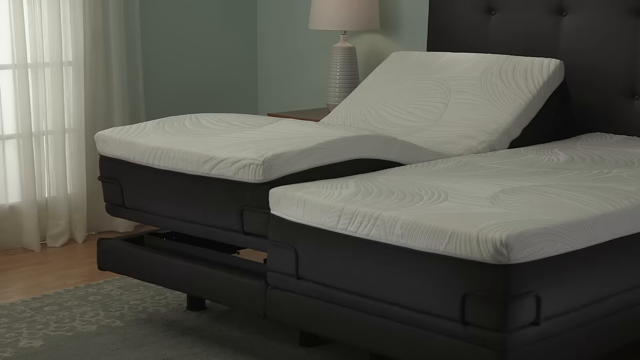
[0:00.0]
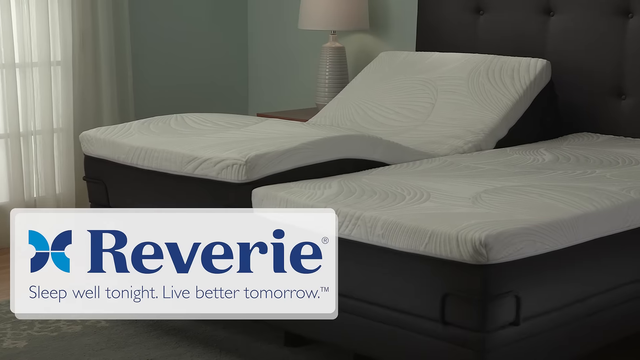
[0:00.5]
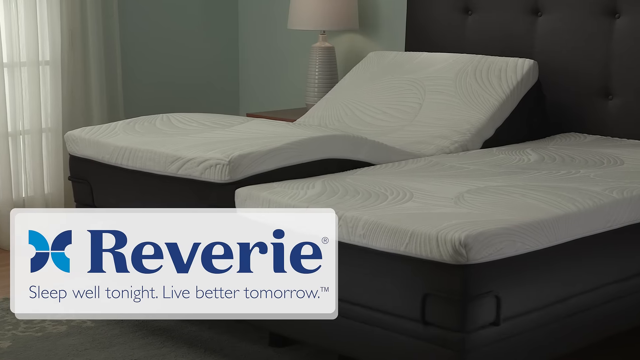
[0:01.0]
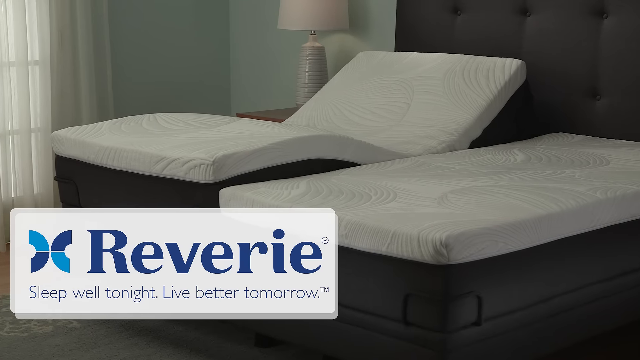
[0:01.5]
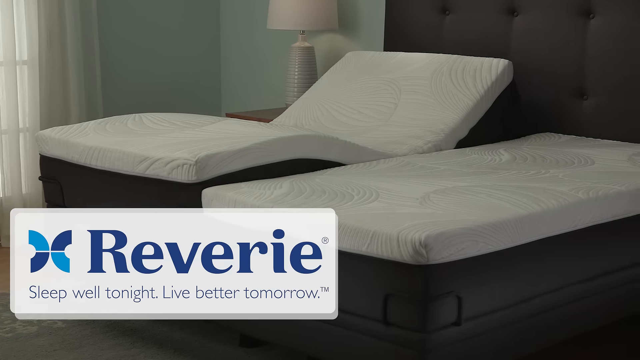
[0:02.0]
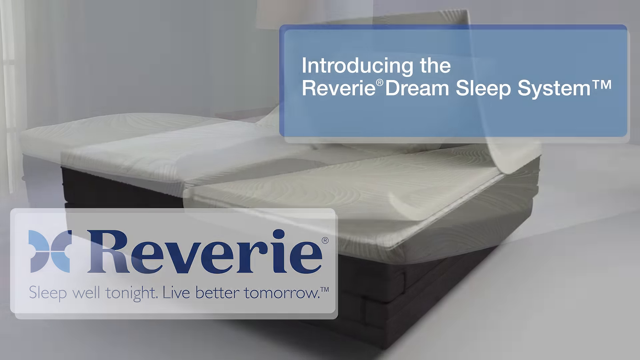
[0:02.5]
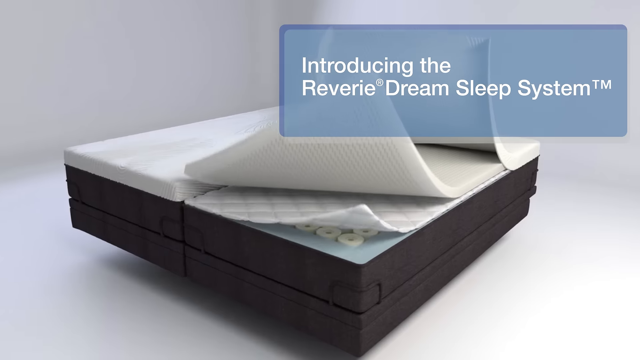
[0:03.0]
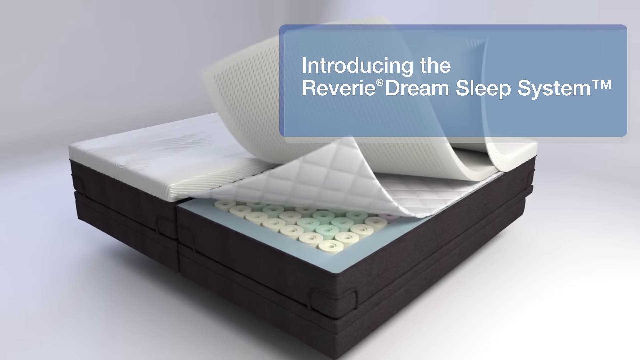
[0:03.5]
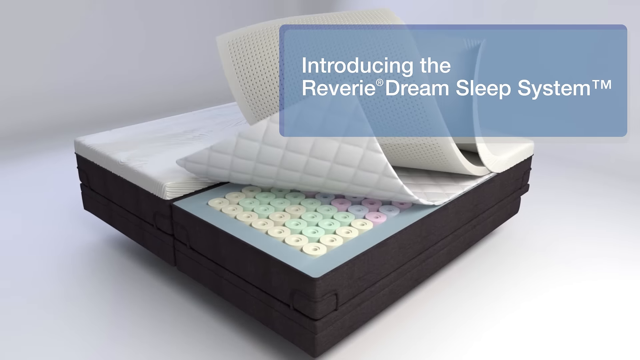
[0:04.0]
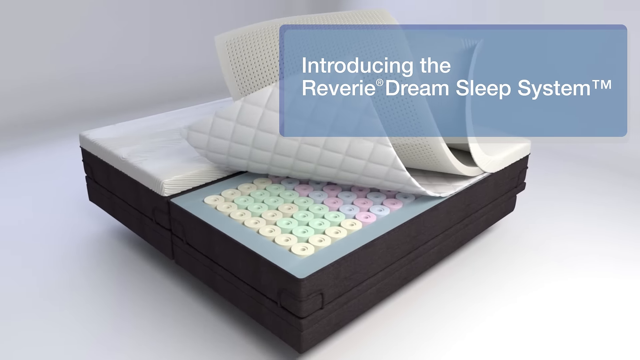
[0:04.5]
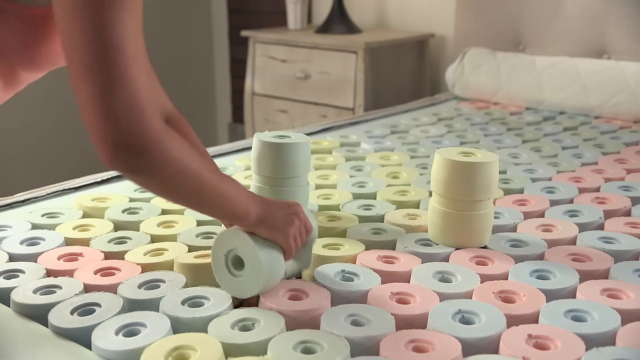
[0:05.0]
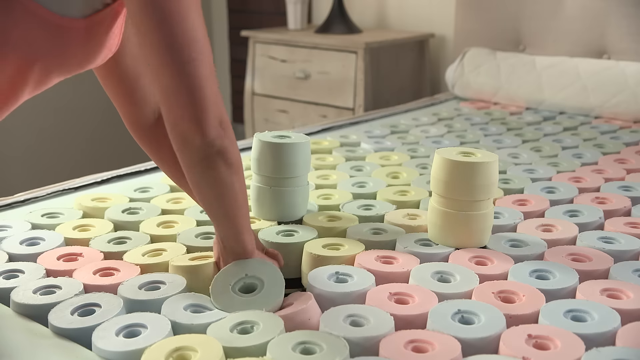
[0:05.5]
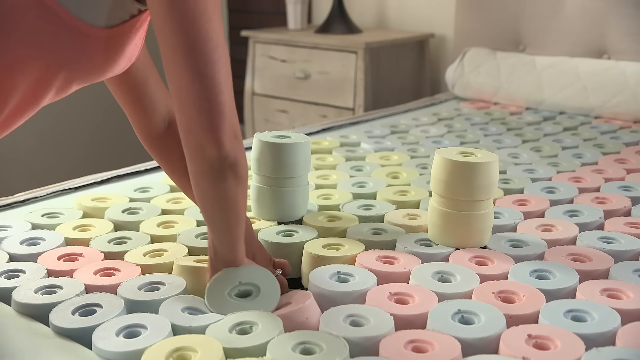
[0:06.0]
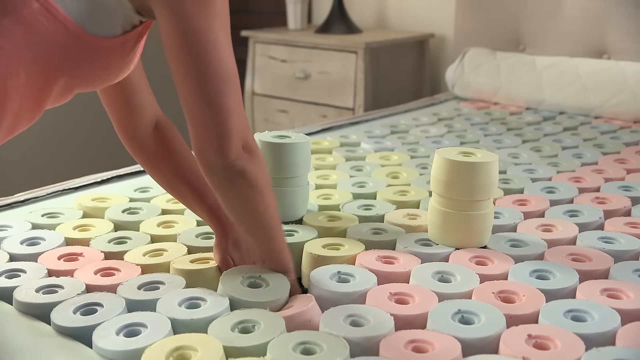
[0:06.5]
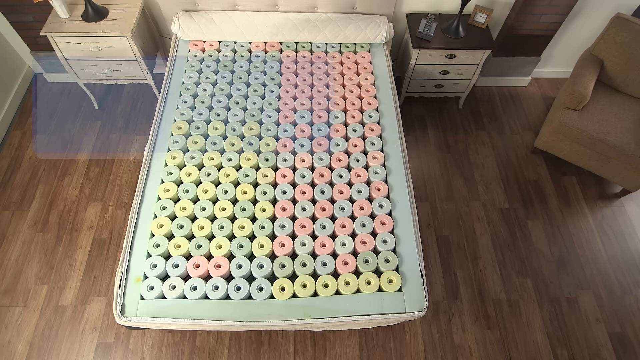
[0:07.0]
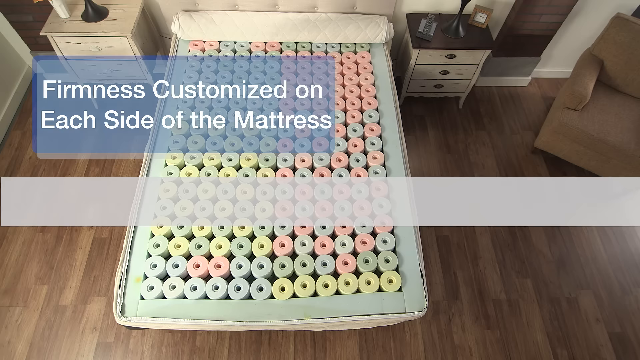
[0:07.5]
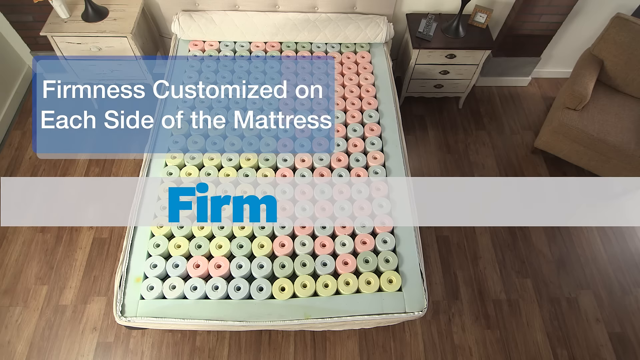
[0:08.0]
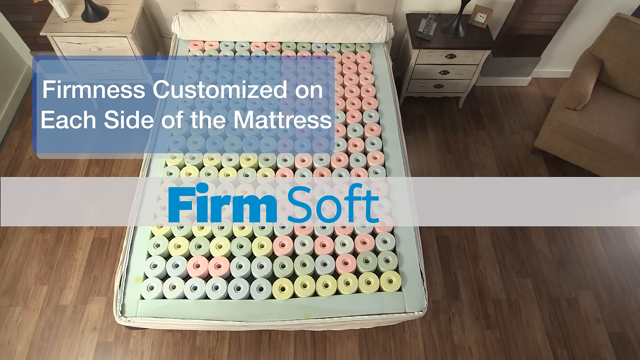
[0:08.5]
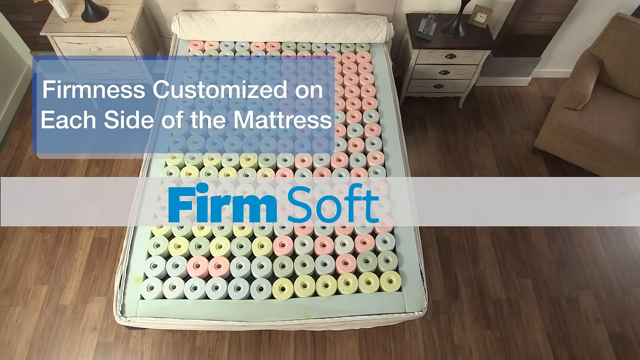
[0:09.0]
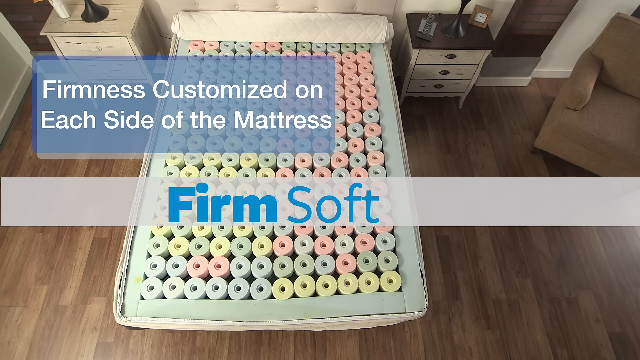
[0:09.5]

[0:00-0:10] An advertisement for a bed opens as the Reverie Sleep Well Tonight and Better Tomorrow logo pops up in the bottom left corner. A picture of the bed appears; it looks like a split king mattress. The various layers of the bed are shown, and the text "Introducing Daydream Sleep System" appears in a square in the top right corner. A person removes cylindrical pieces from the mattress. Text reads "firmness customized on each side of the mattress," with "Firm" and "soft" labels. The mattress has a white topper, and the next layer is a charcoal color; these appear to be pieces that can adjust the contour. The bed is shown in a bedroom as the camera pans across. The inside of the mattress is in pastel blue, yellow, and green-pink colors.